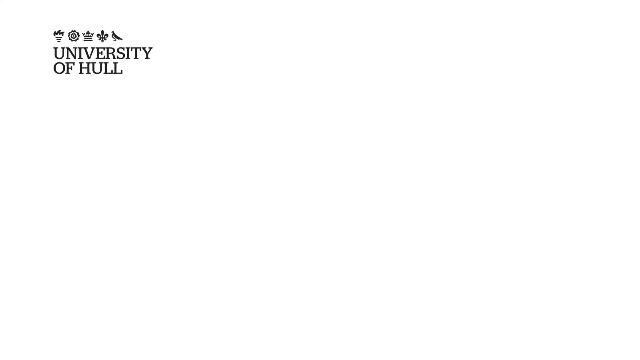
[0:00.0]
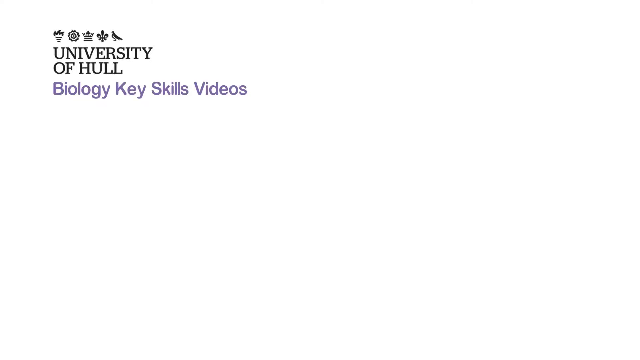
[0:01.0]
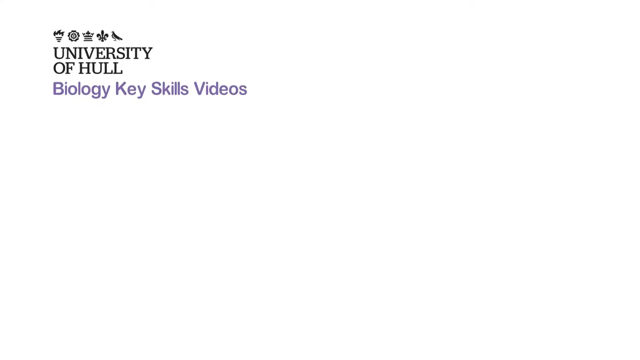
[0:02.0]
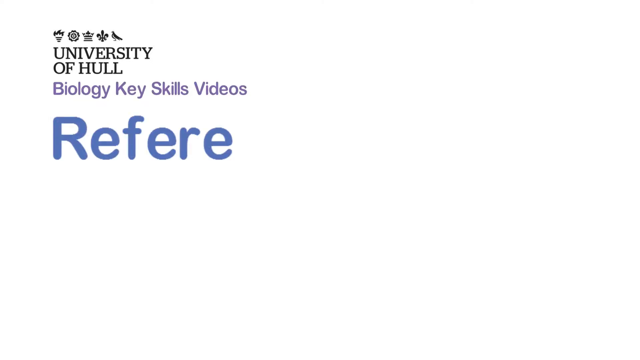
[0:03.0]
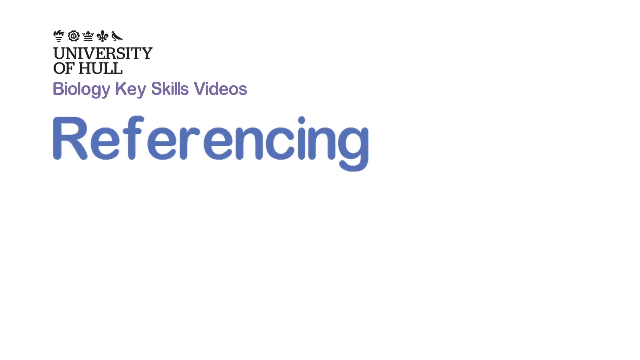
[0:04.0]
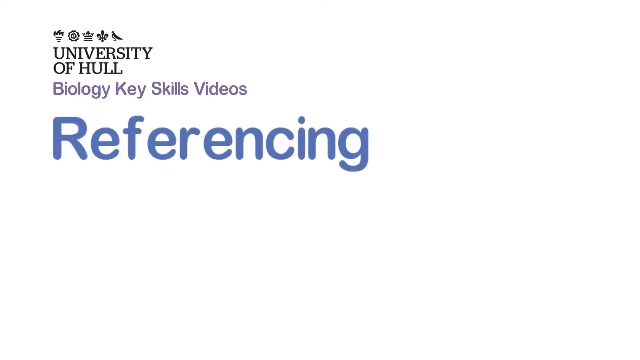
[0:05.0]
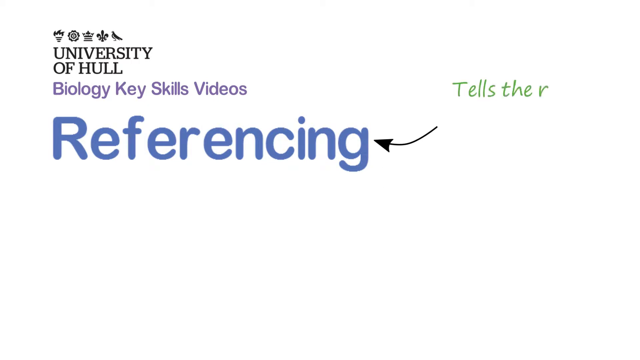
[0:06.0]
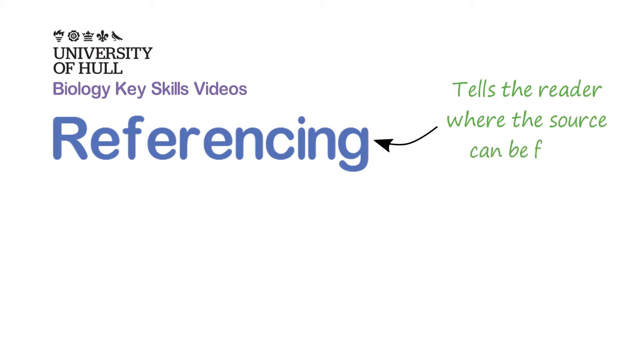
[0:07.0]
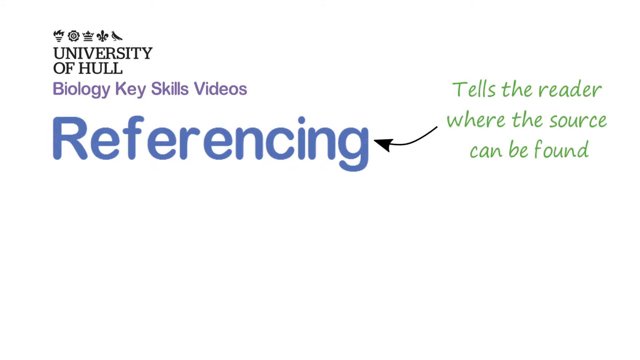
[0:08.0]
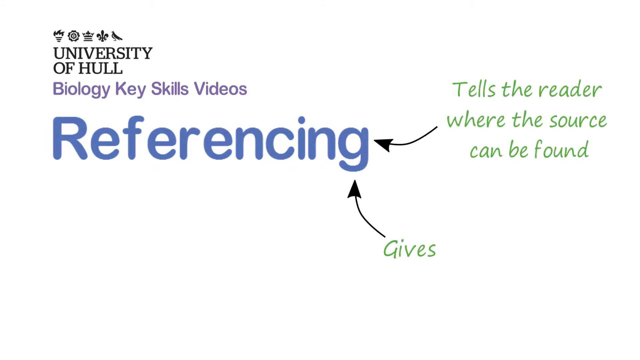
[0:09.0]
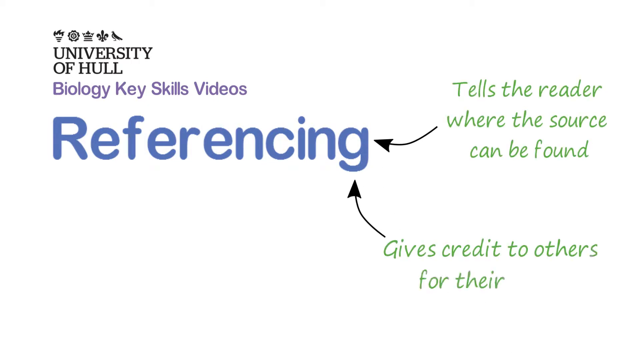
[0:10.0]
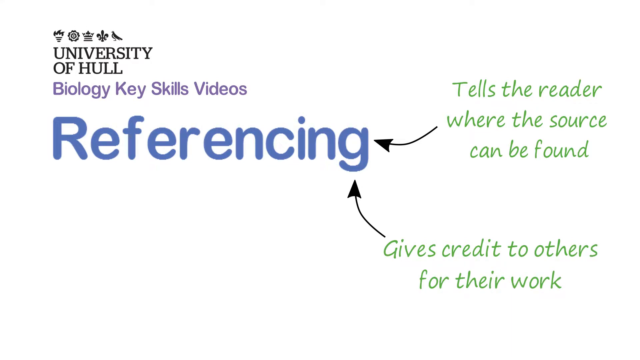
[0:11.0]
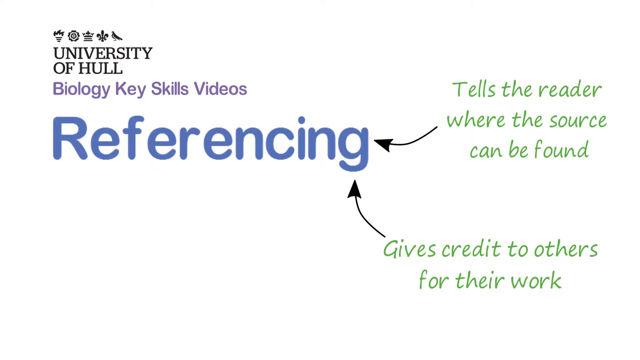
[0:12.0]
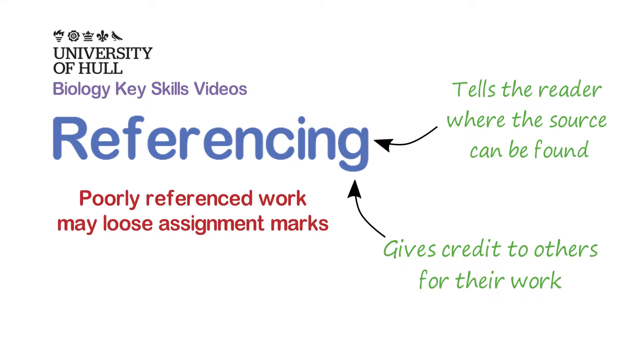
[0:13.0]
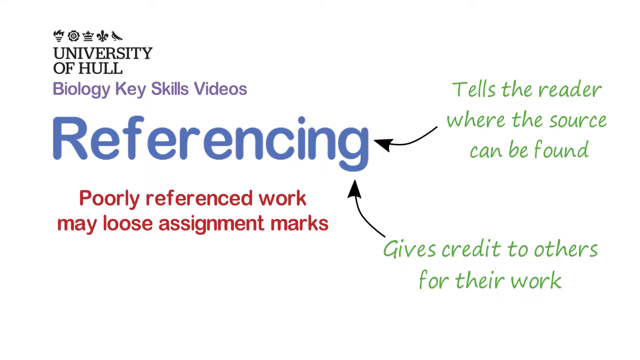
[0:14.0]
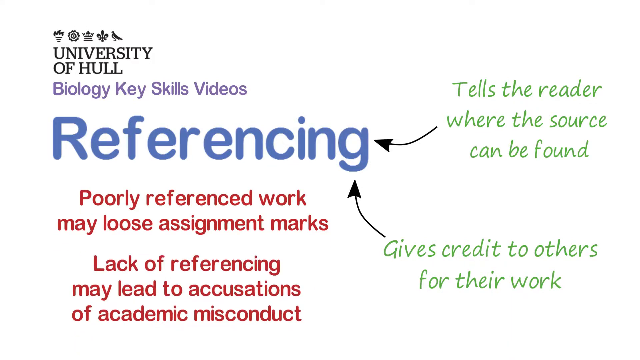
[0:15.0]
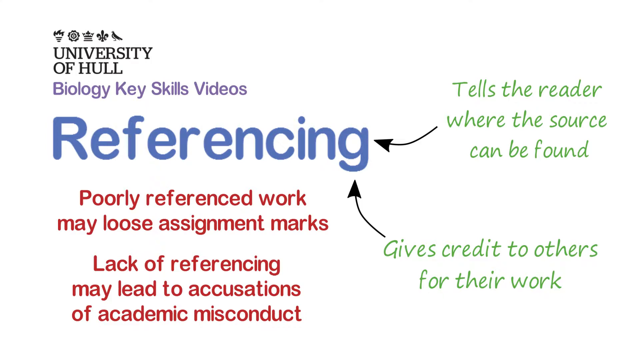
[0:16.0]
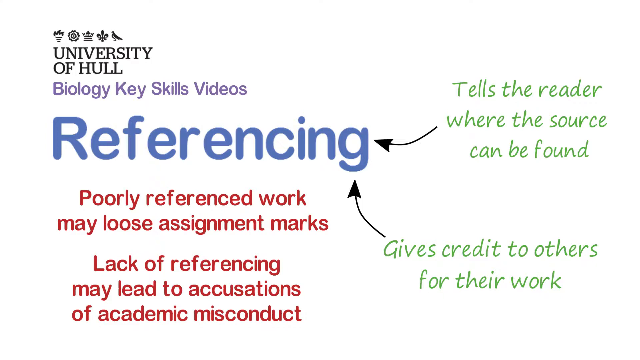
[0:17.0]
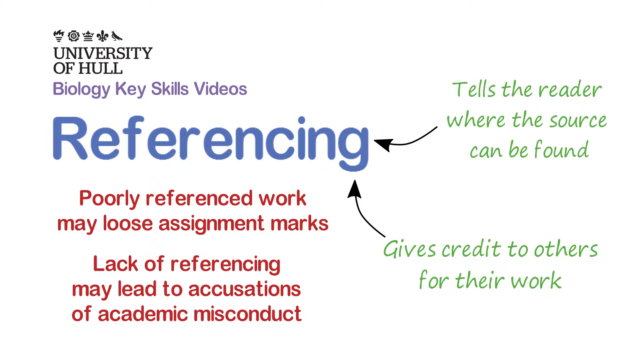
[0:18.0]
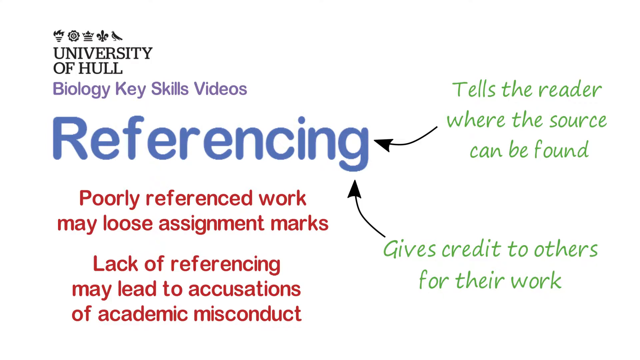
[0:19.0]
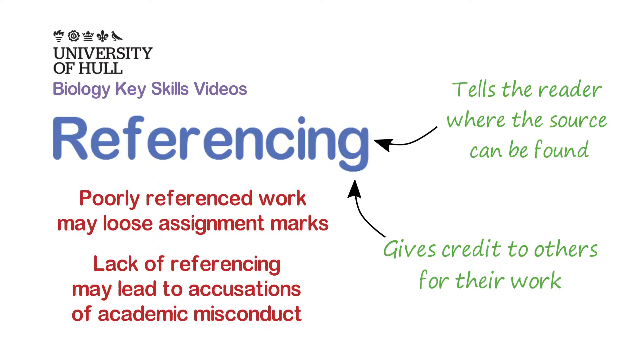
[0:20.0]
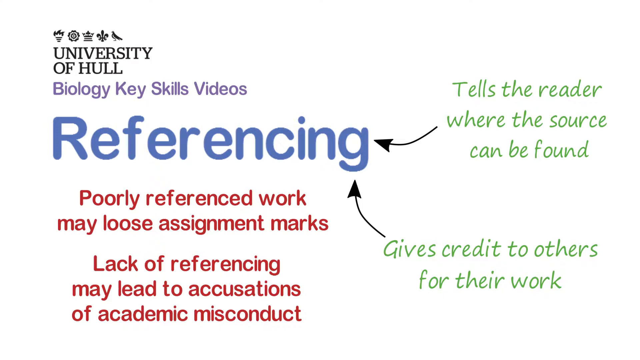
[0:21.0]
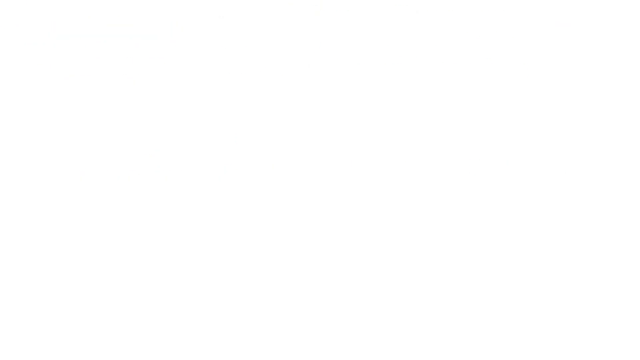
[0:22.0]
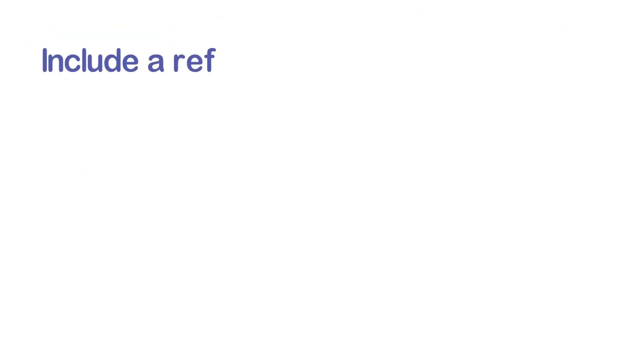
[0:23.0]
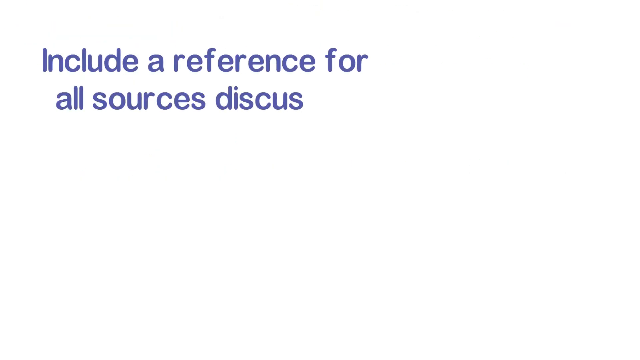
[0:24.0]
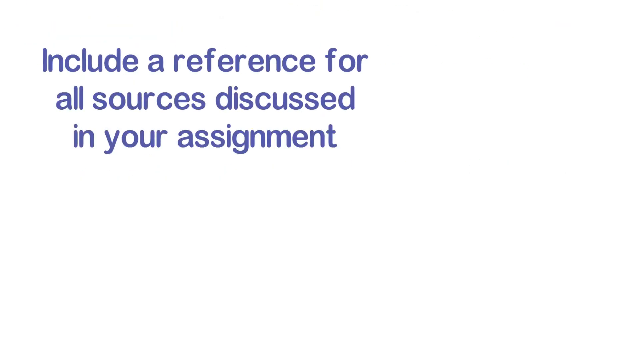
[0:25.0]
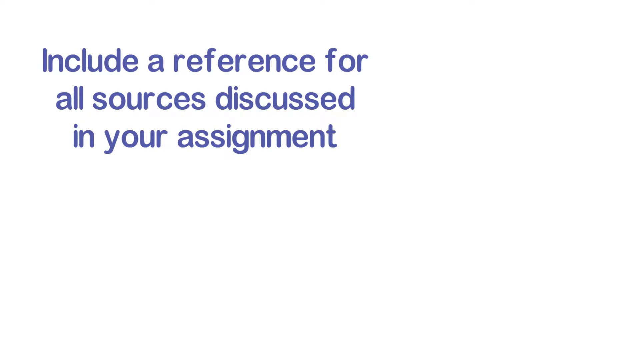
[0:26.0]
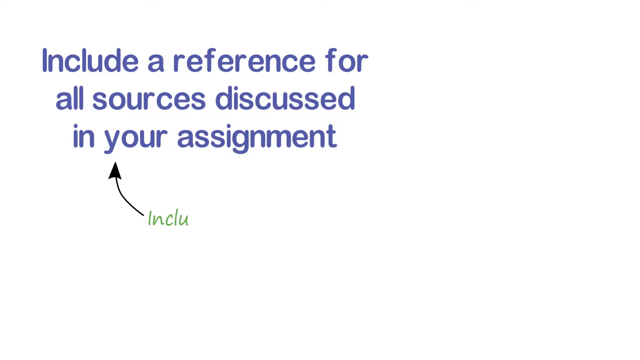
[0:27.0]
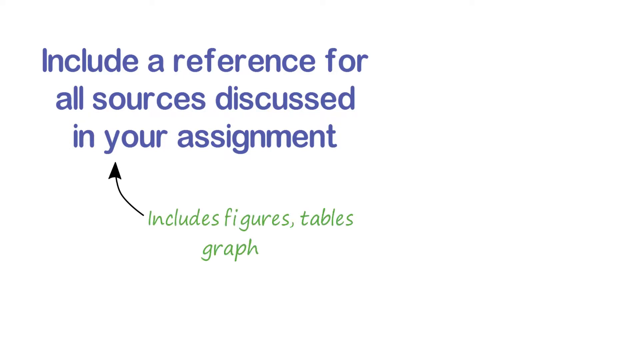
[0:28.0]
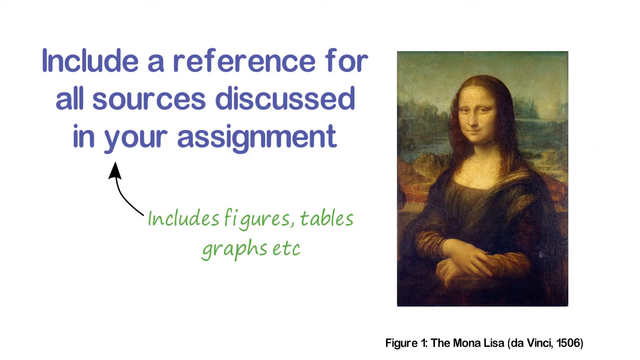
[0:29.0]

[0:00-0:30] The screen is white. In the top left-hand corner is the text "University of Hull." Underneath it, in light purple, is "Biology key skills videos," and below that is the word "Referencing" in blue. Underneath that, in red, is "Poorly referenced work may lose assignment marks," and below that, in green, is "Lack of referencing may lead to accusations of academic misconduct." On the right side of the screen, toward the top, green text begins "Tells the reader where the source," with a black arrow going from it to the word "Referencing." Underneath that, in green, is "Gives credit to others for their work," with another black arrow pointing to "Referencing." All of that then goes away and the screen turns white. Blue text prints out: "Include a reference for all sources discussed in your assignment." Underneath it, green text appears reading "Includes figures tables graphs etc," with a black arrow going from it to the blue text. To the right of that, a picture of the Mona Lisa painting appears.